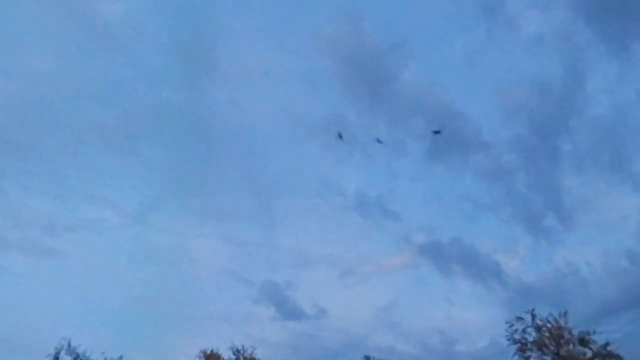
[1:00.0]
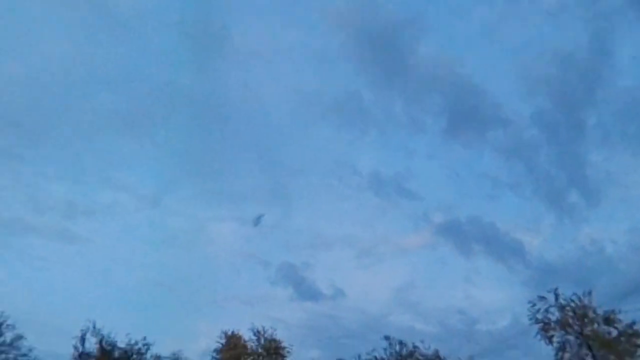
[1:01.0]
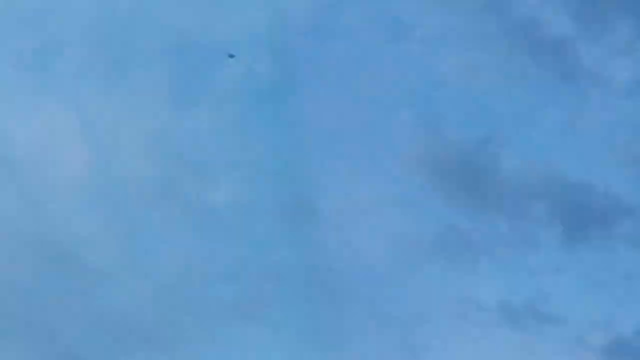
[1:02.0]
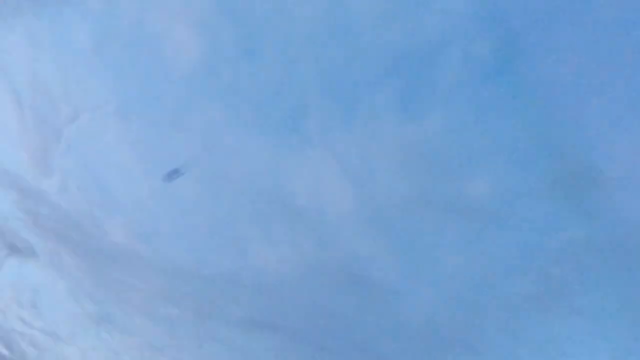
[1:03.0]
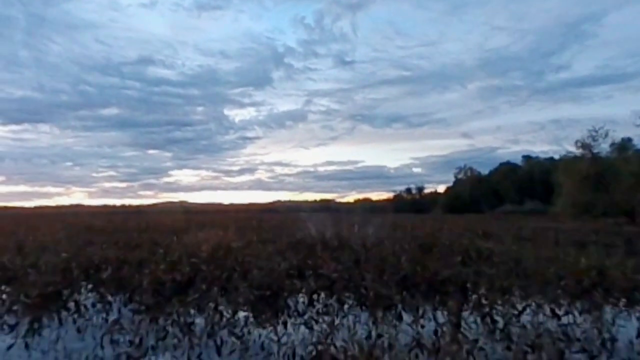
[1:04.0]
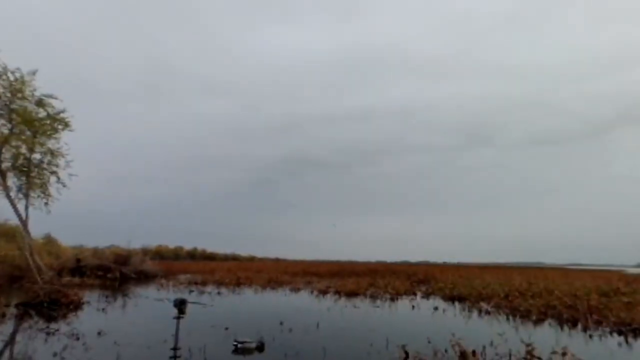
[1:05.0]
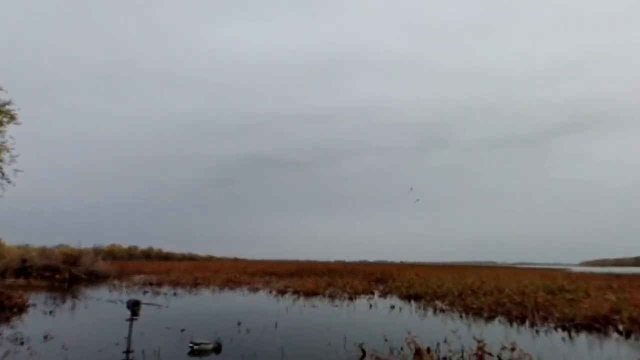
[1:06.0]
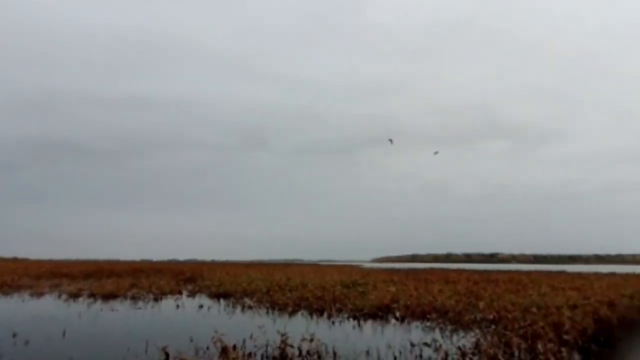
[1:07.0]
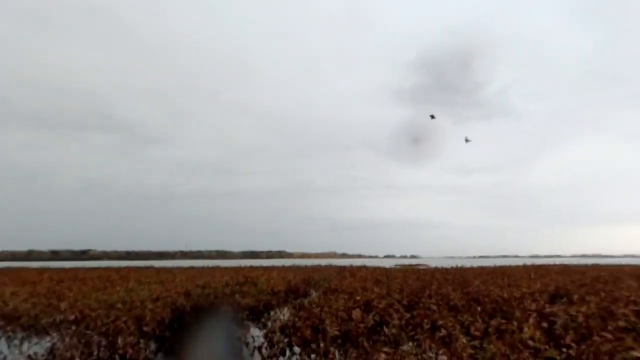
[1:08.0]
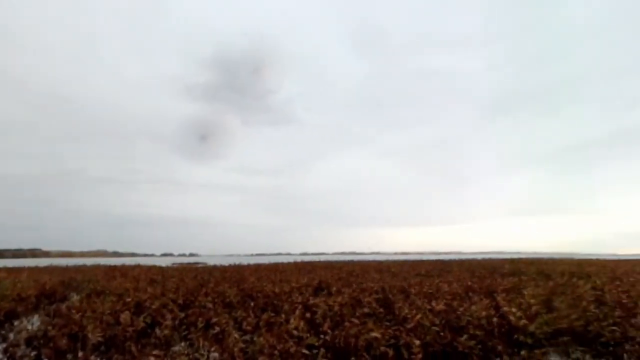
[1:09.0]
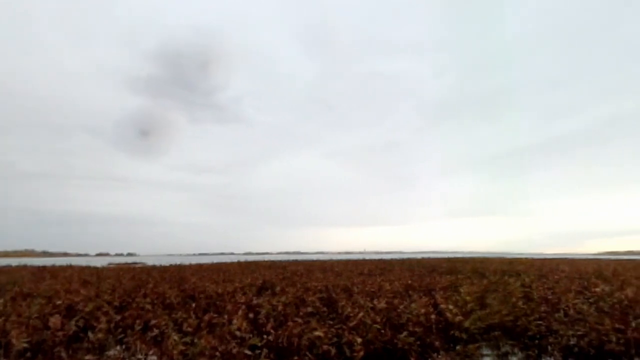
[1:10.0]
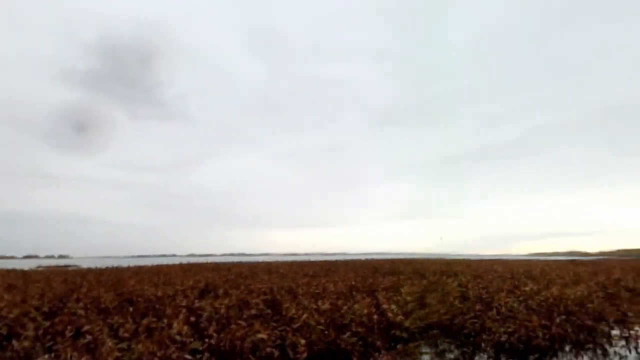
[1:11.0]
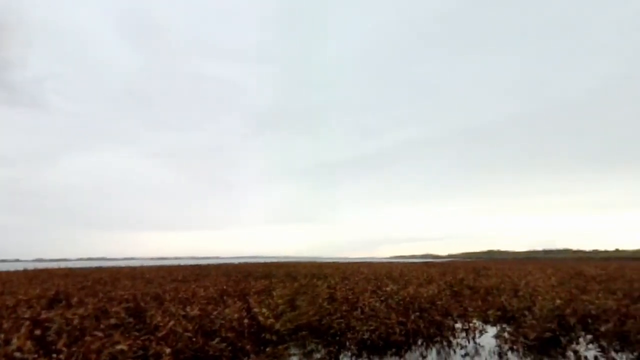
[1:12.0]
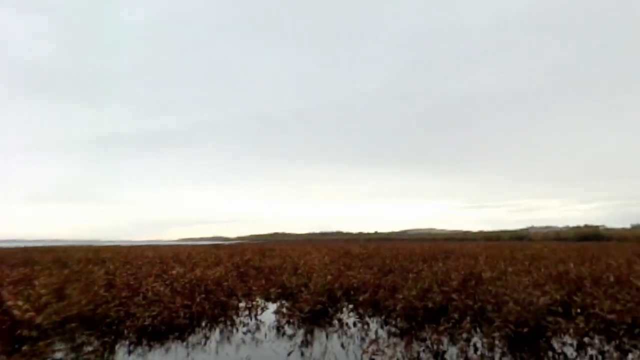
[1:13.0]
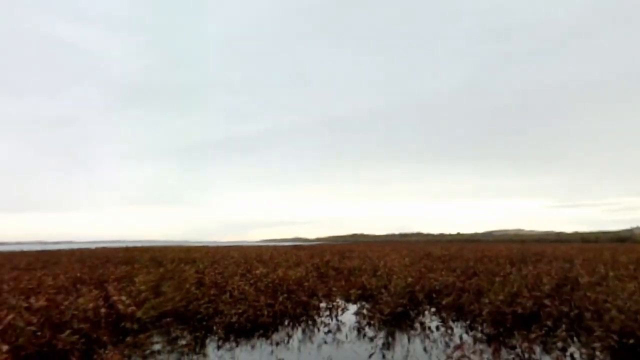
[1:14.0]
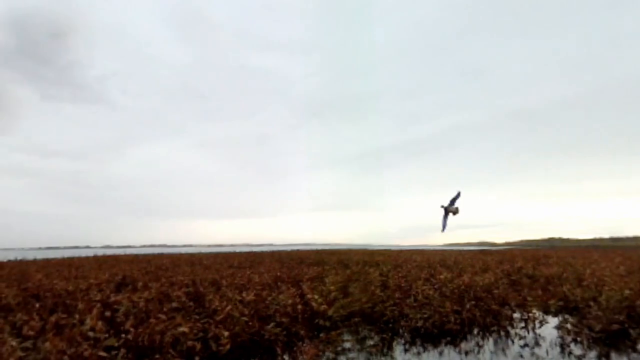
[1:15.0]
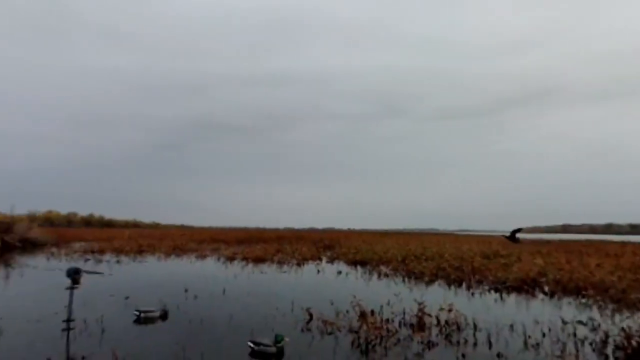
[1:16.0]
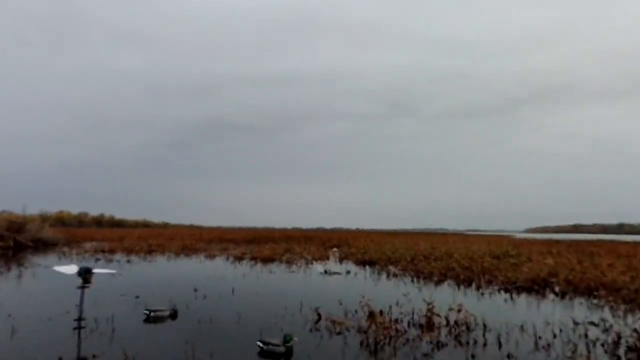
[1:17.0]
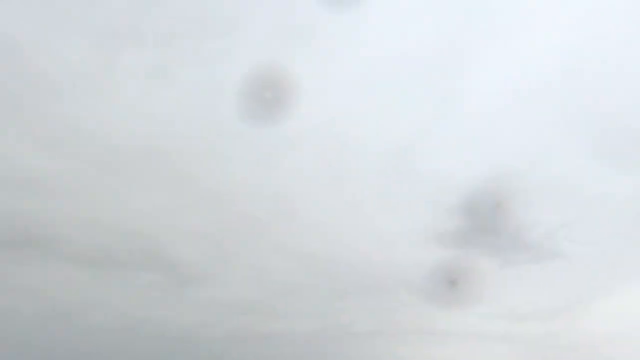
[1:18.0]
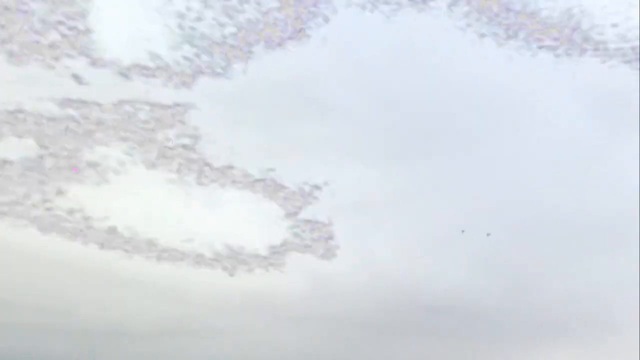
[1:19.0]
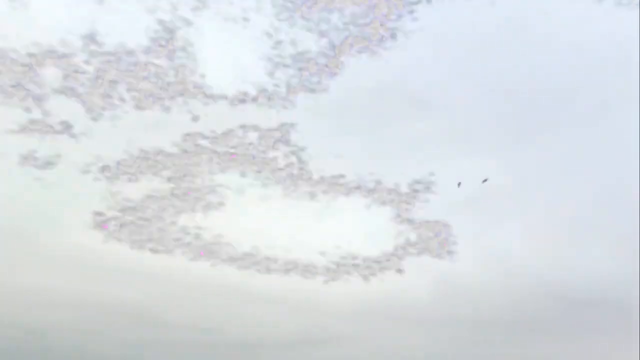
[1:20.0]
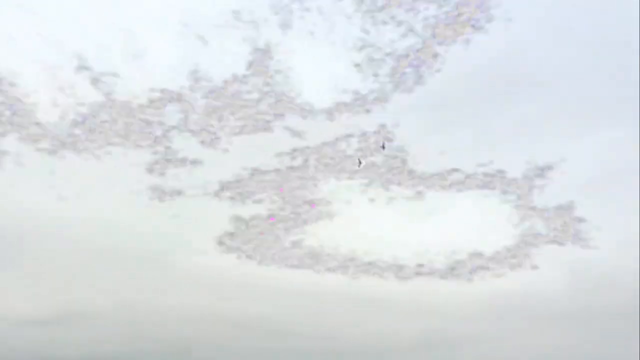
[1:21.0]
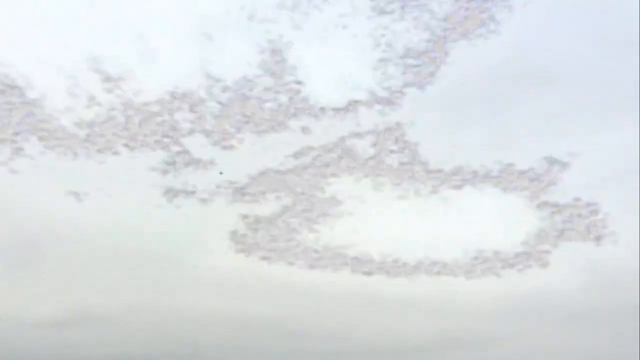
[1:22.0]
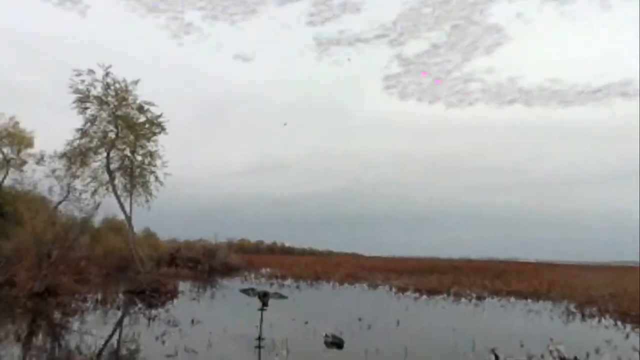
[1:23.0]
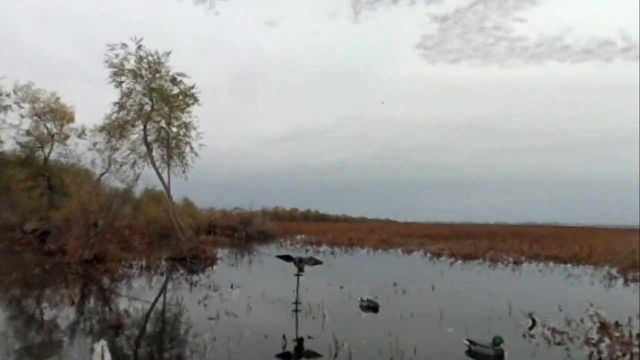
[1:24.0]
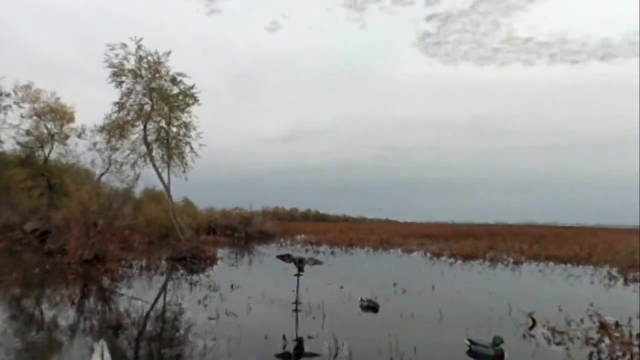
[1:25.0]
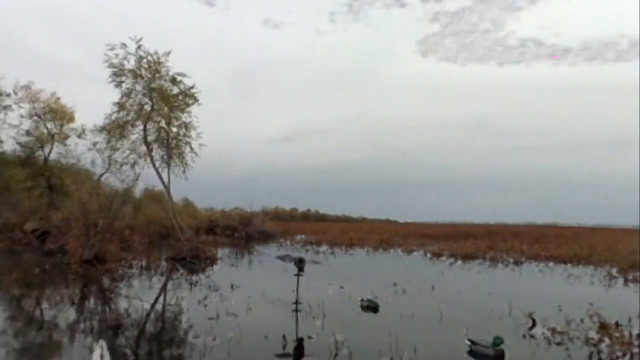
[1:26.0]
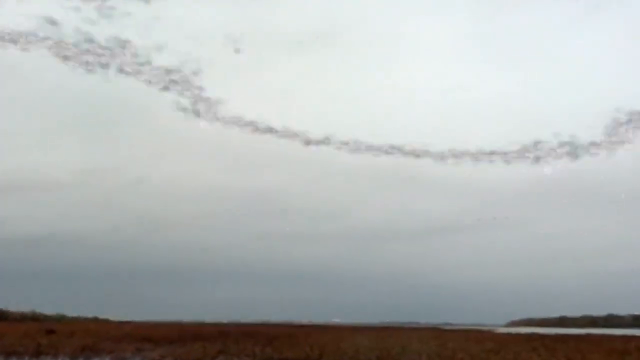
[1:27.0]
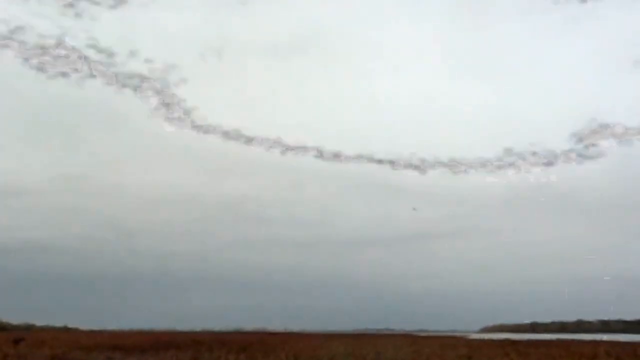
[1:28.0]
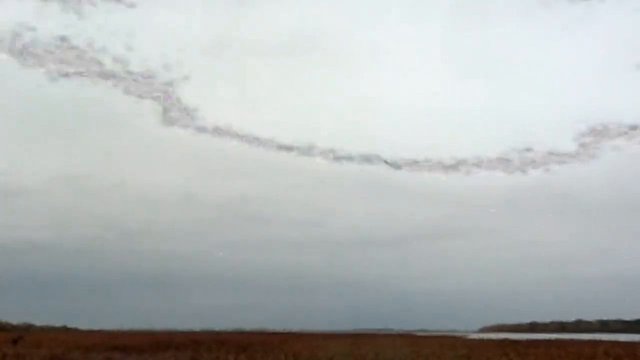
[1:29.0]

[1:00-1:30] One of three ducks flying in the air is shot down and falls, probably onto the terrain or the water. Another of the three is shot down and lands in the water with a splash. Two other ducks suddenly fall down; it is unclear whether they were shot. The camera appears to try to locate movement, moving from right to left, left to right, and right to left again, and finds one of the ducks, which flies and then lands in the water; again it is unclear if it was shot. The sky is then shown with weird artifacts on the clouds as some ducks fall, possibly shot. Other ducks appear in the distance flapping their wings, all black with large beaks and some white on their chests.